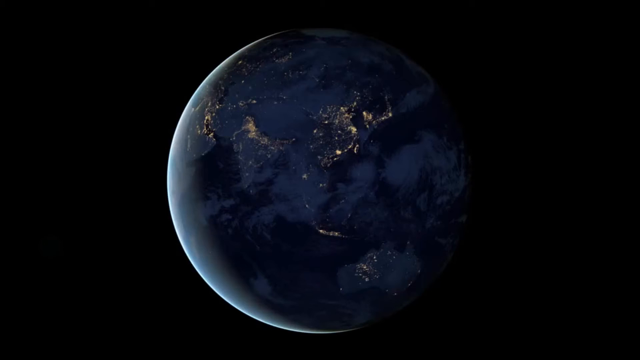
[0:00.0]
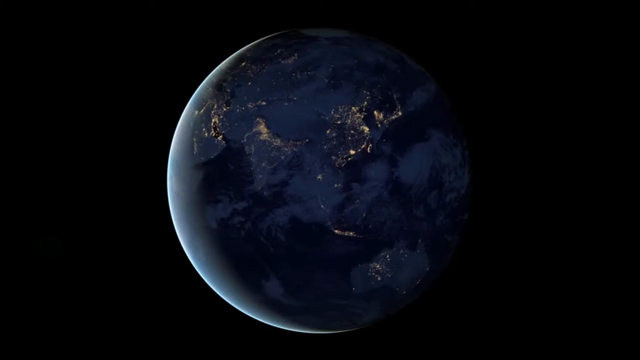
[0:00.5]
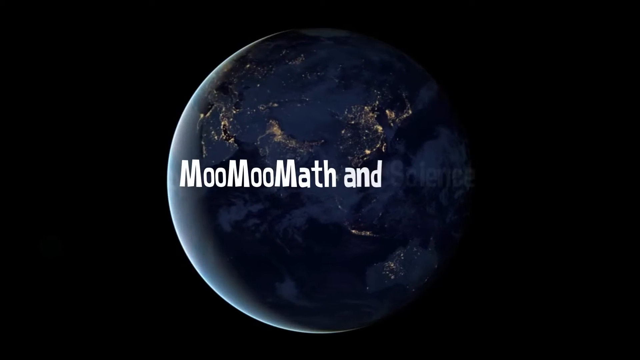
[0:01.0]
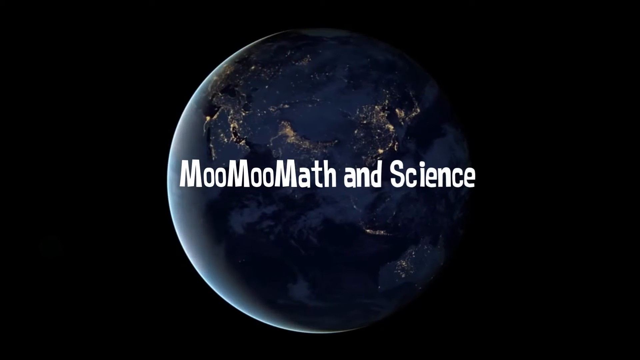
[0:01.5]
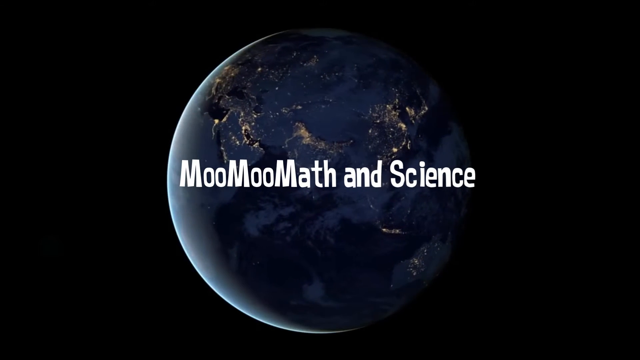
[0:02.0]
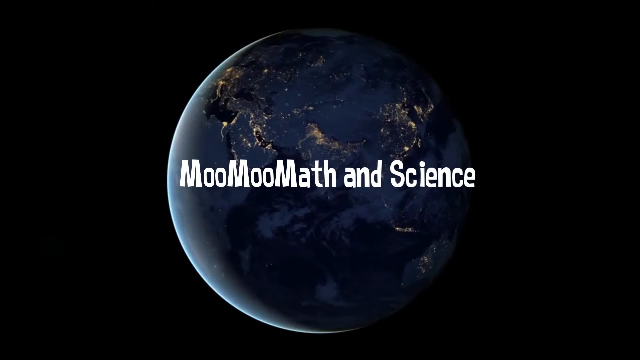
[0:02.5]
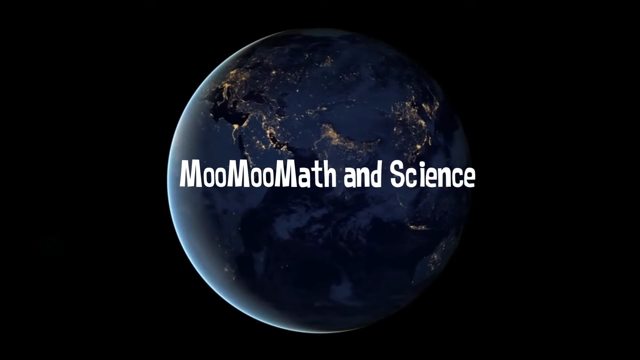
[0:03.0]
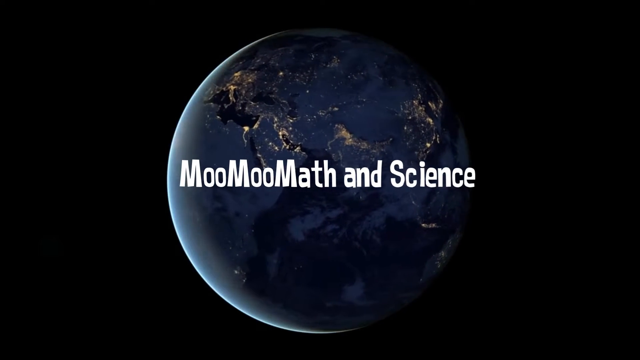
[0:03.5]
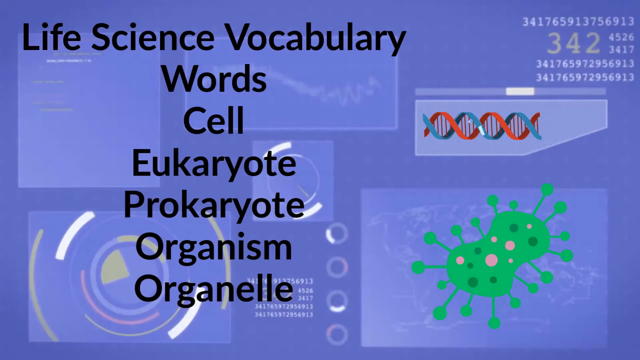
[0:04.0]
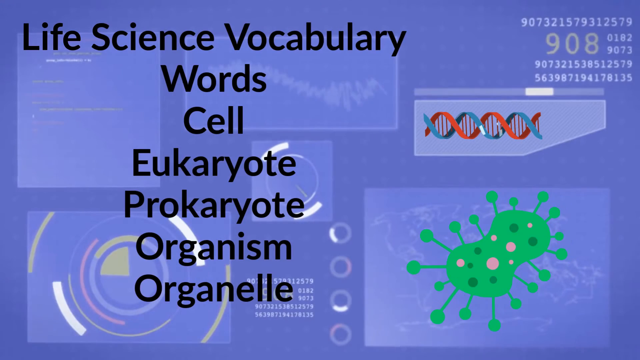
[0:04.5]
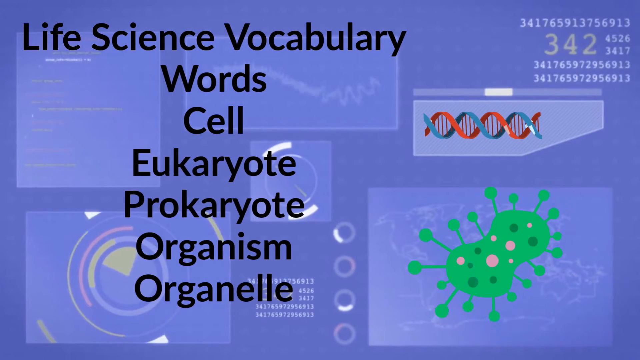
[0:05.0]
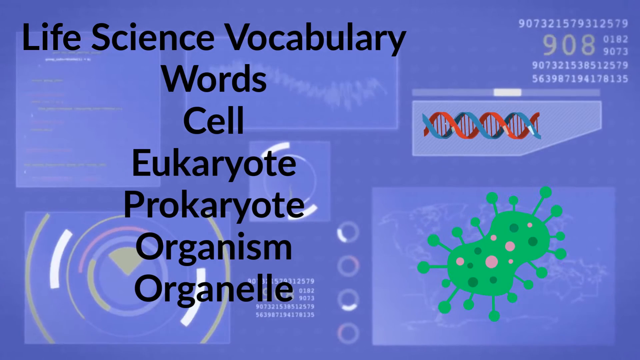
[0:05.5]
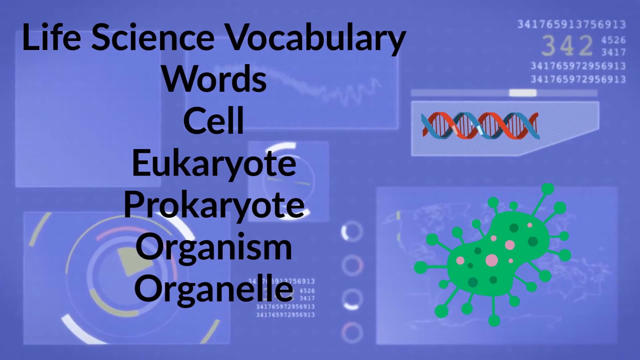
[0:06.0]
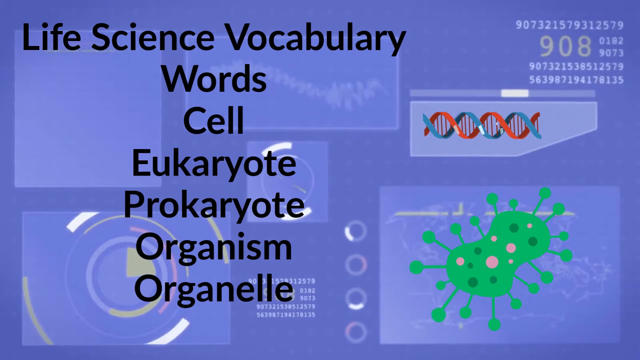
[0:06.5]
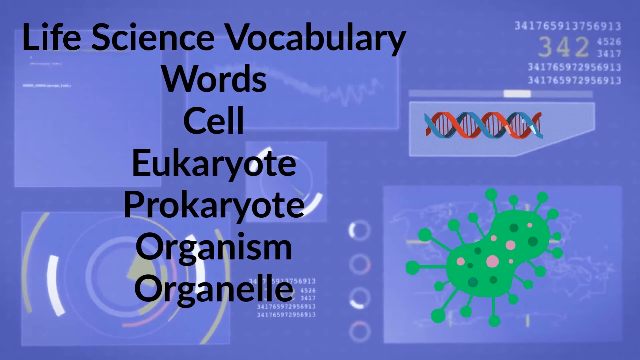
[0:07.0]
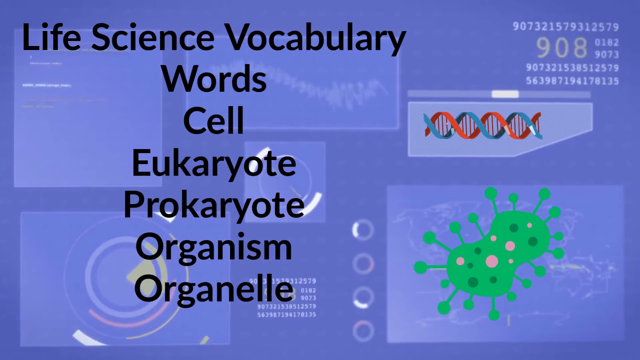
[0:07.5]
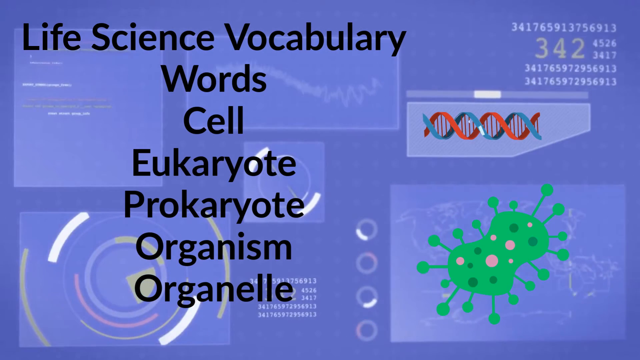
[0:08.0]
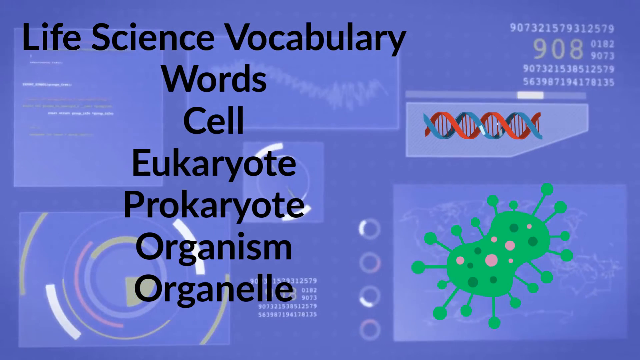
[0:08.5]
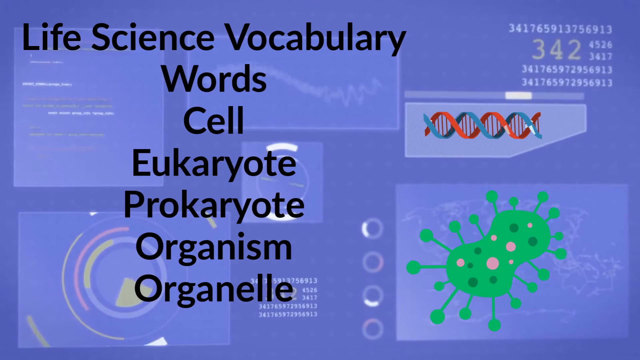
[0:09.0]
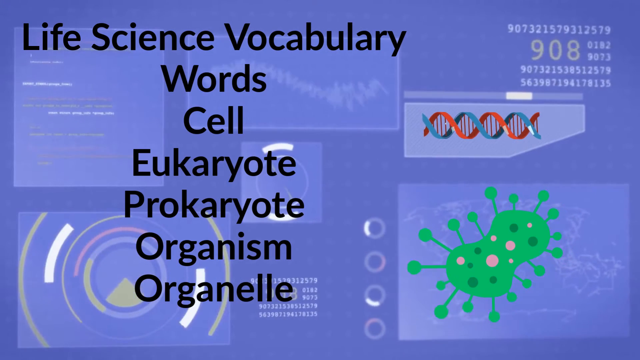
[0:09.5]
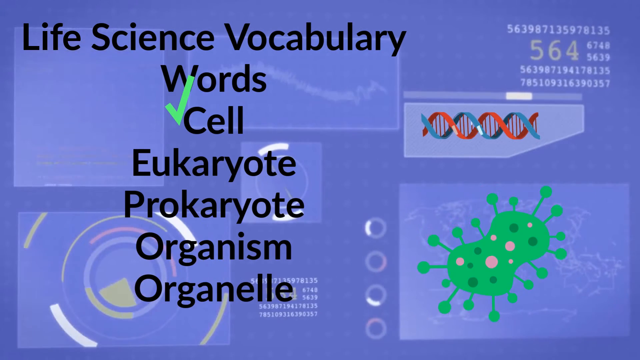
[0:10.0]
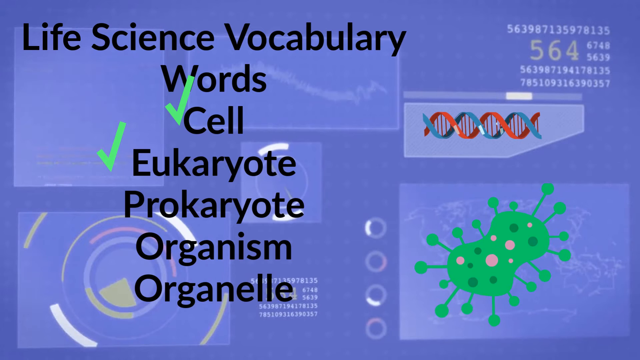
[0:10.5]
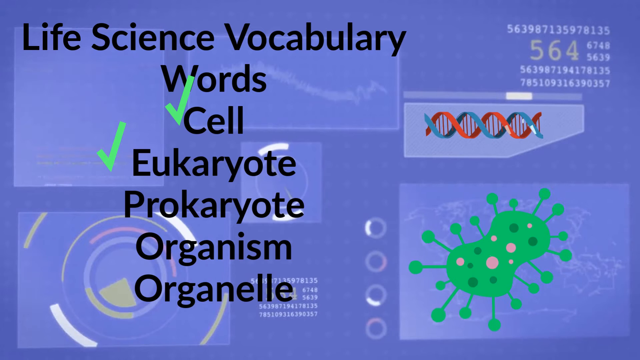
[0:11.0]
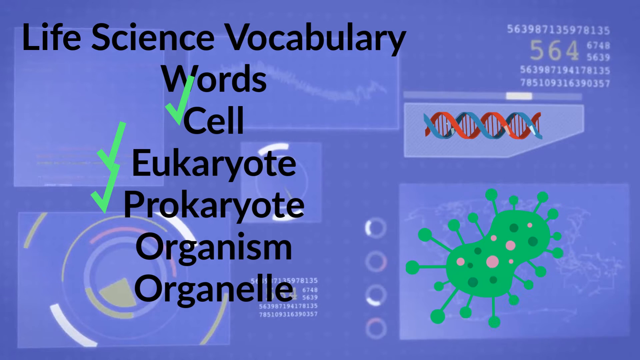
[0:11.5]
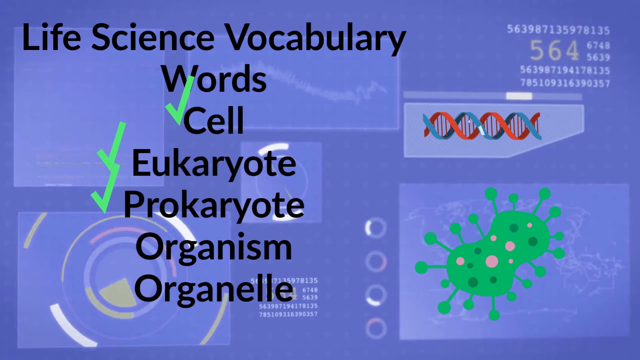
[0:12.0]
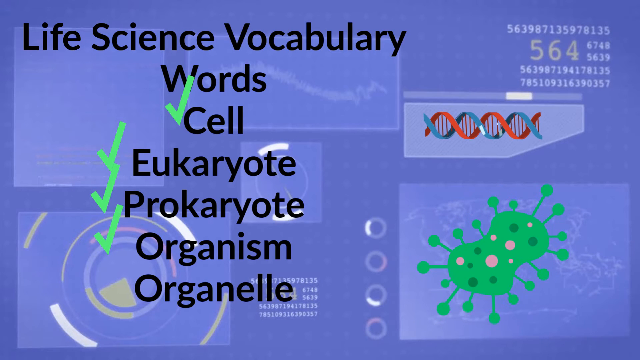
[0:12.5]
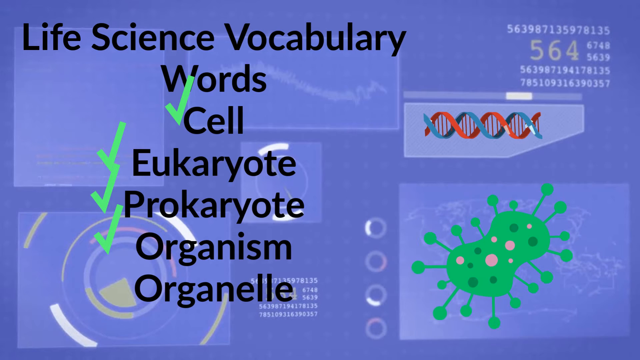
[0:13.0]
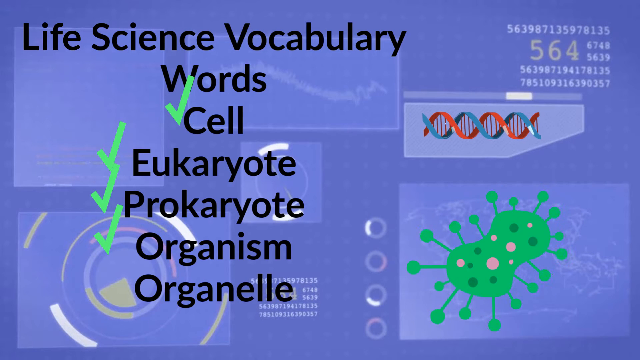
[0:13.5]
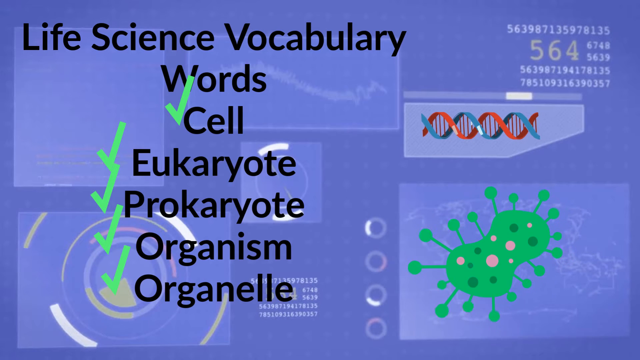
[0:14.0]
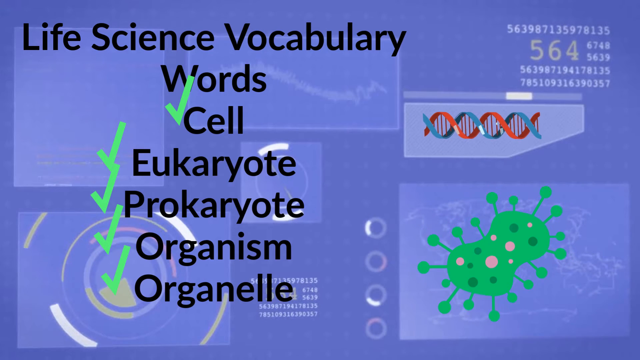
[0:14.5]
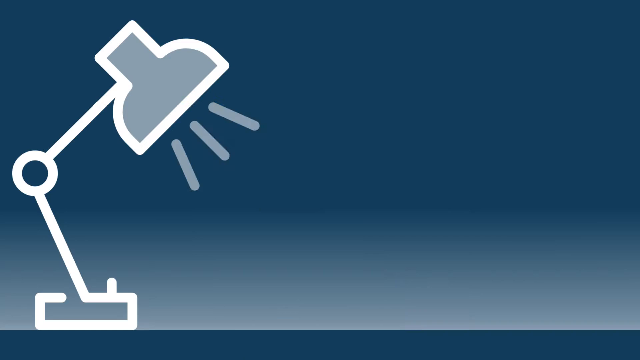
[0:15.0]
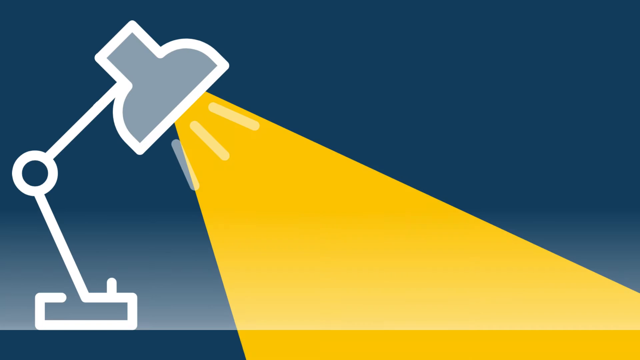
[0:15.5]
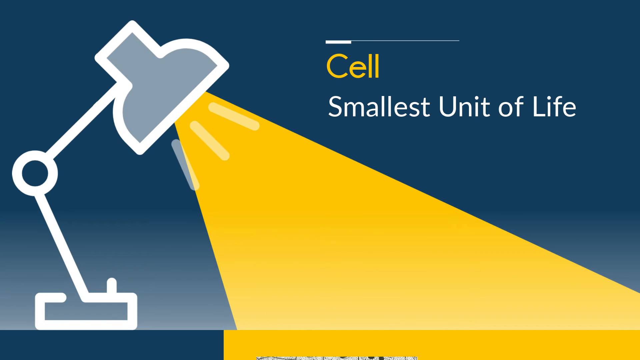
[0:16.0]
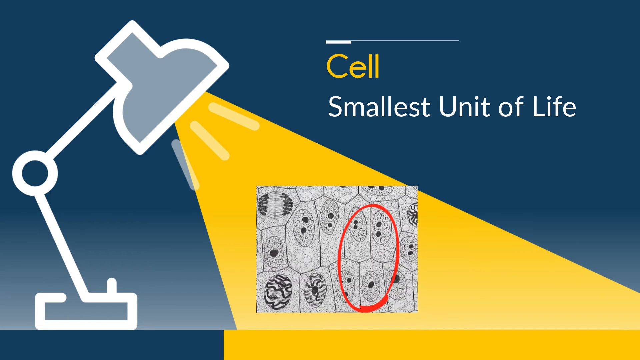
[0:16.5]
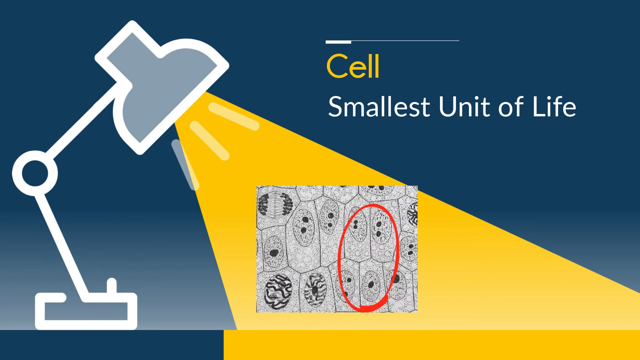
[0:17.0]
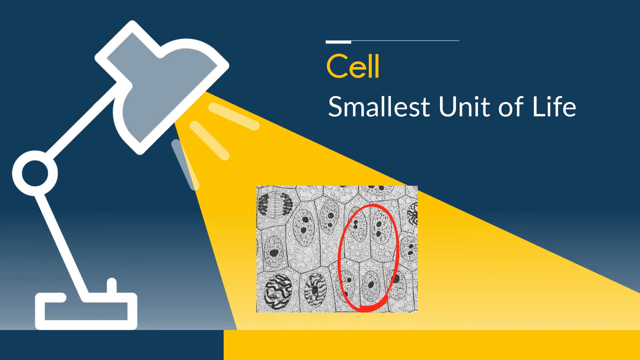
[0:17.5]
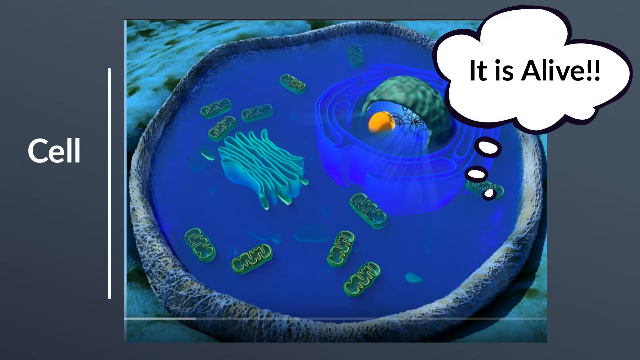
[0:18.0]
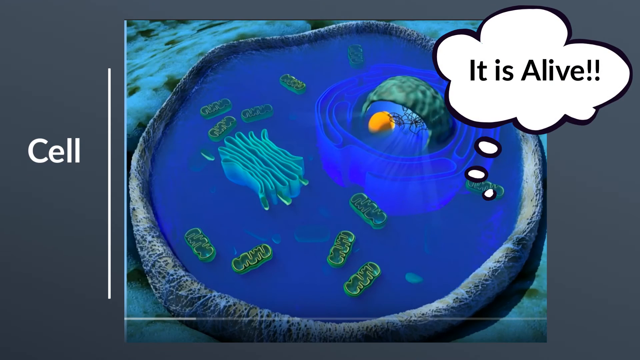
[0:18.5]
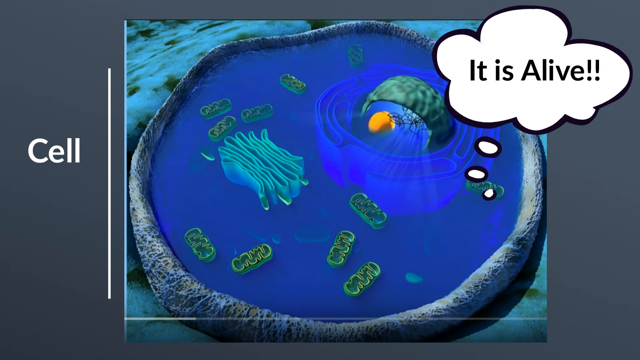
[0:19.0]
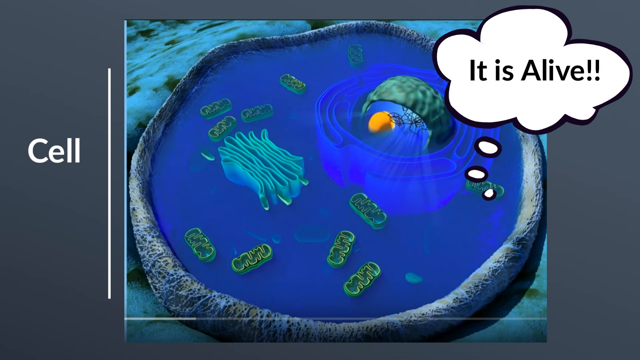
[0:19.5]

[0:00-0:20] The planet Earth rotates very slowly, and a title card kind of comes up right in front of it reading "MooMoo Math and Science." Next, a screen shows a set of vocabulary words: "Life Science Vocabulary" with "Cell, Eukaryote, Prokaryote, Organism, Organelle" listed right under it. The video then focuses on the cell and gives a short definition: "the cell is the smallest unit of life." The cell is shown kind of flowing around in what looks like a nucleus or an environment, with a speech bubble at the top right that says "it is alive."